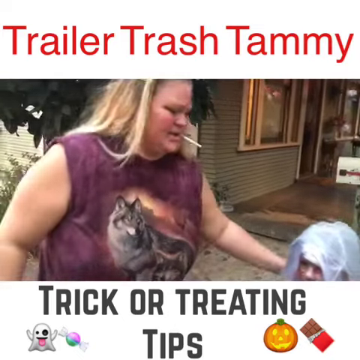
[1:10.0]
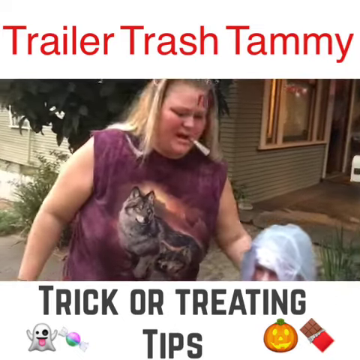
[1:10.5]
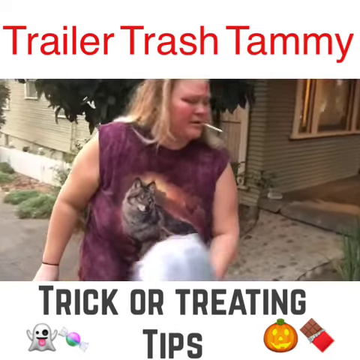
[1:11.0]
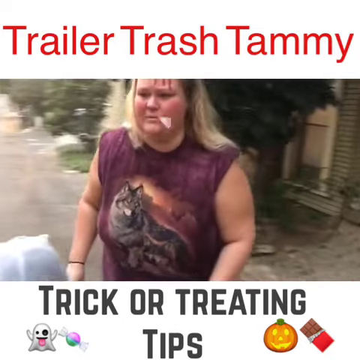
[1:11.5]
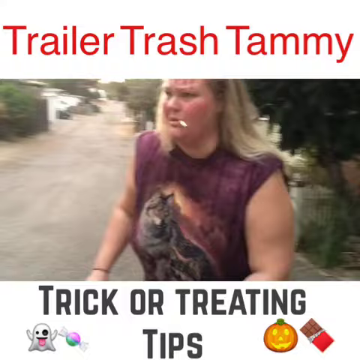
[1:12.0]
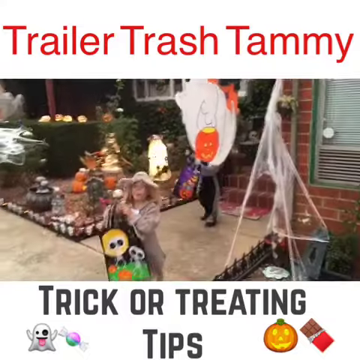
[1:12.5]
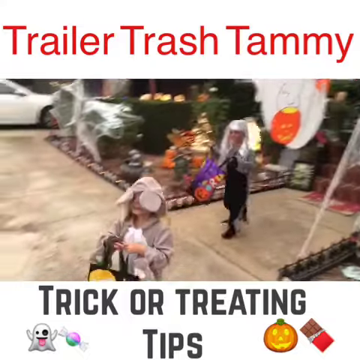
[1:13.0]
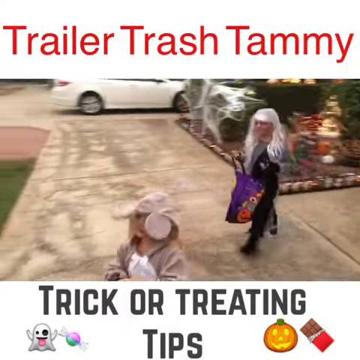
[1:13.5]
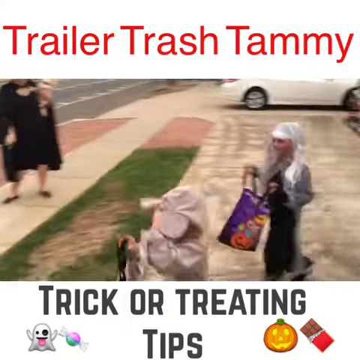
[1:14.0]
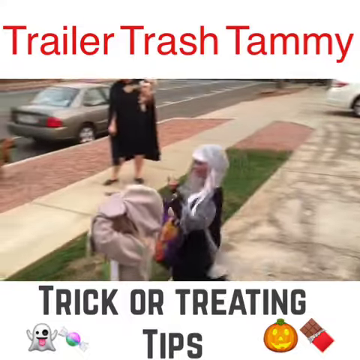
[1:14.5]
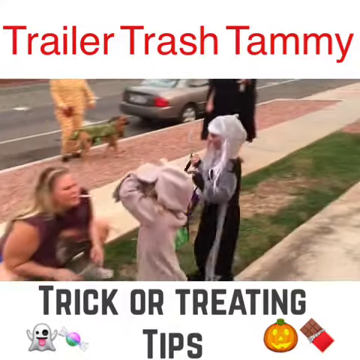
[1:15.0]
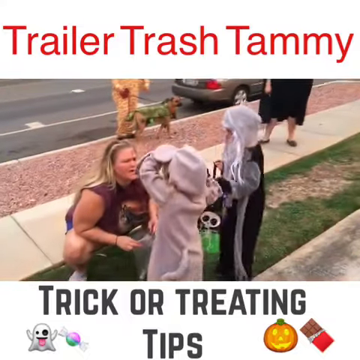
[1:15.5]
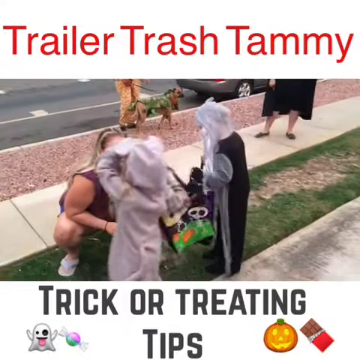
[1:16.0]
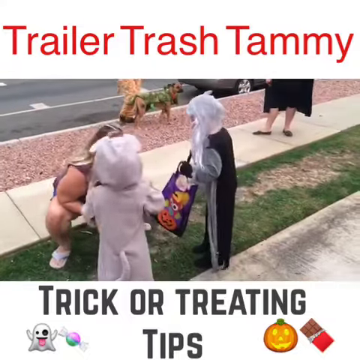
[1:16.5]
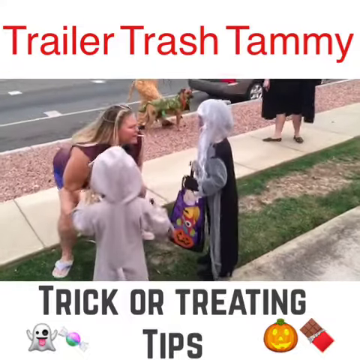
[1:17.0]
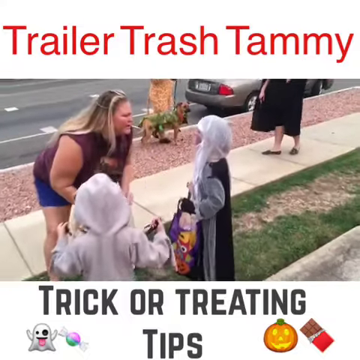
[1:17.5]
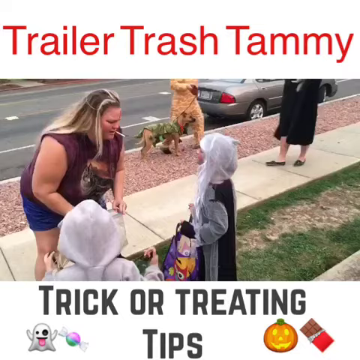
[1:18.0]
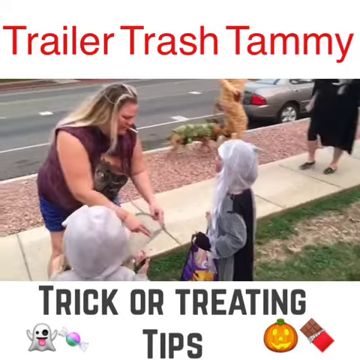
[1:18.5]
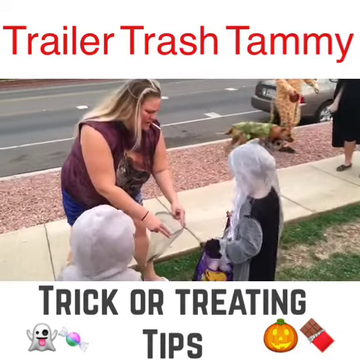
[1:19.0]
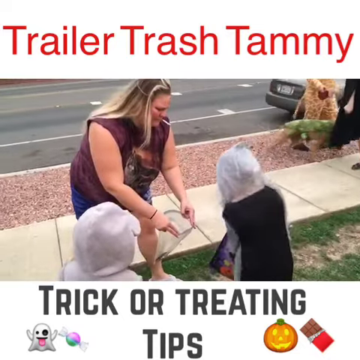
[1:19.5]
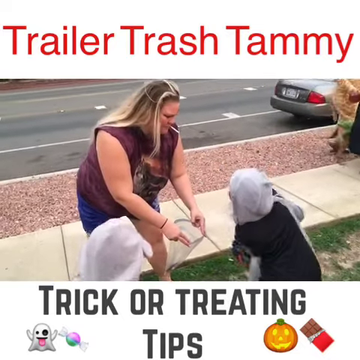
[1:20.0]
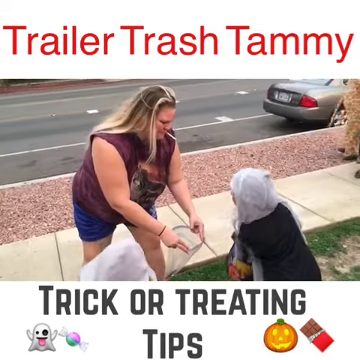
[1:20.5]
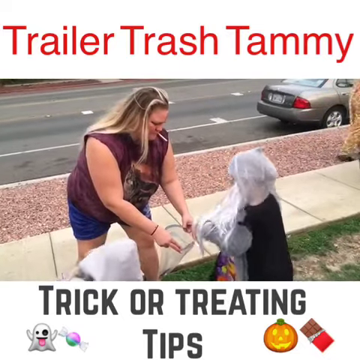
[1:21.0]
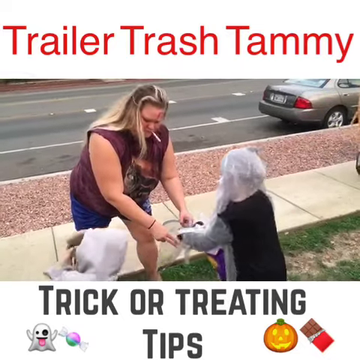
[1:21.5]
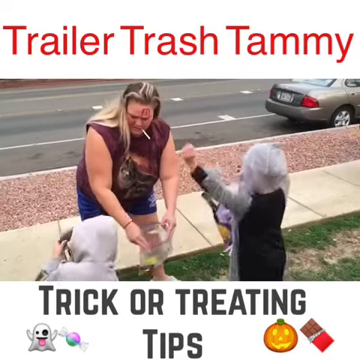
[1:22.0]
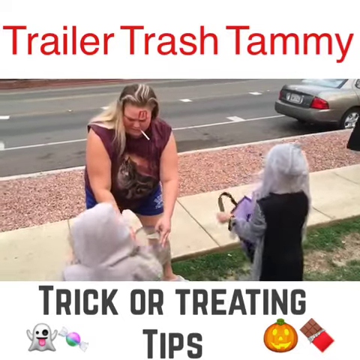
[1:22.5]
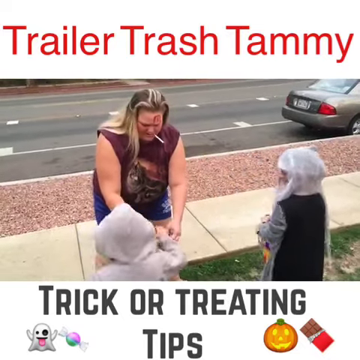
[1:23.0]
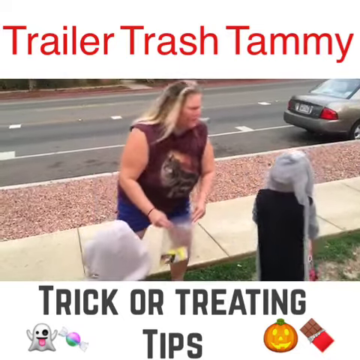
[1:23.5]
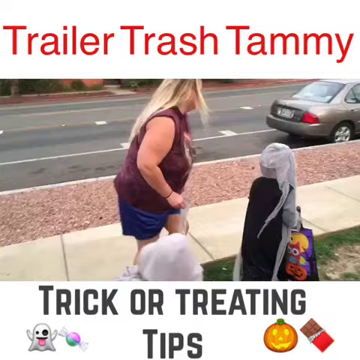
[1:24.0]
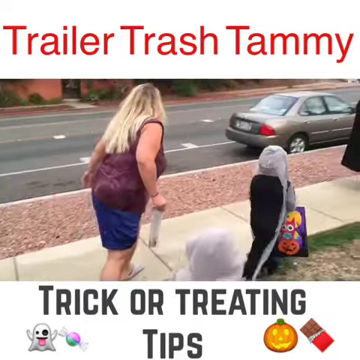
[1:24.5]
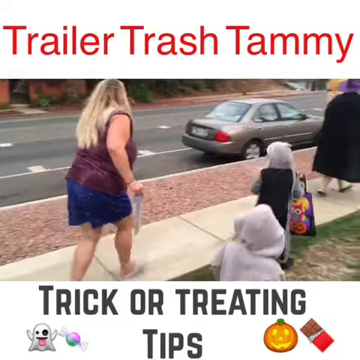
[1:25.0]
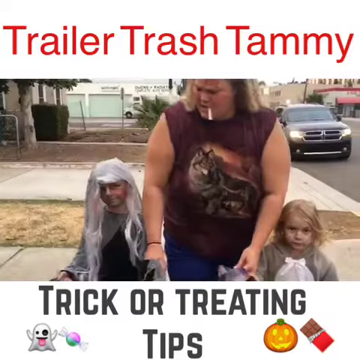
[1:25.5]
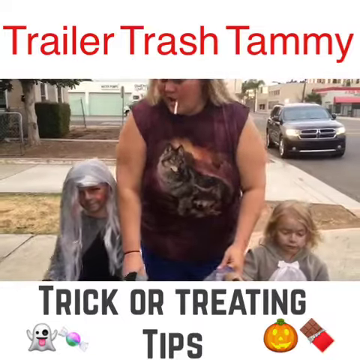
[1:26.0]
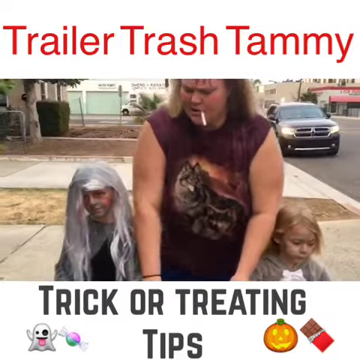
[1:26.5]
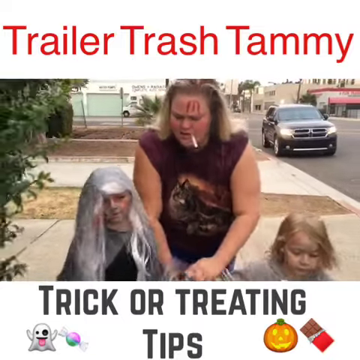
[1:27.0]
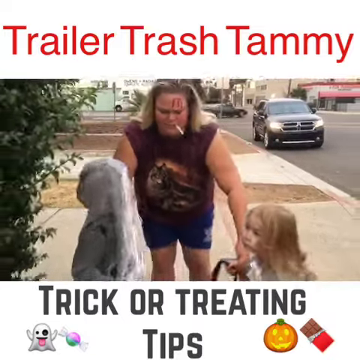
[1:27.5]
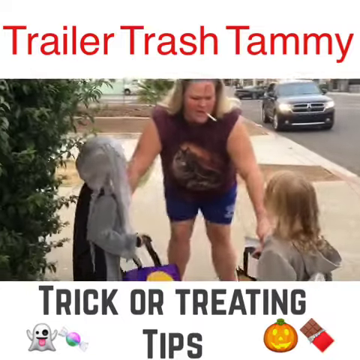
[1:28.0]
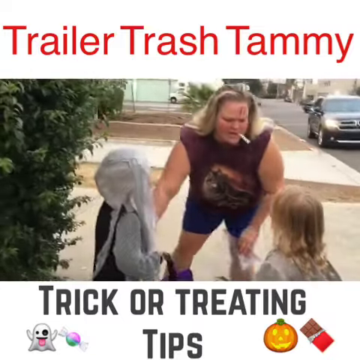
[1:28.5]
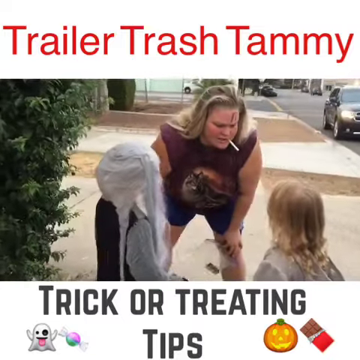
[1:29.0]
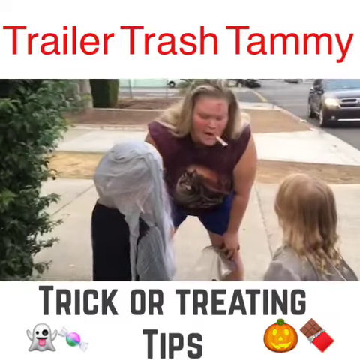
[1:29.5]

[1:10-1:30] The children appear to walk back toward Tammy after going up to a home to trick-or-treat. Trailer Trash Tammy still has the unlit cigarette hanging out of her mouth. The children walk away happy with their candy, now holding actual trick-or-treating bags instead of the gallon-sized Ziploc bags. They run away from the house gleefully after receiving candy from the homeowner. Next, a heavyset woman walks down the street in a black muumuu and black flat shoes. A beige sedan is parked on the side of the street. The children walk over to Tammy, who is kneeling down and talking to them; she has on white flip-flops. One of the children, a little girl, is dressed like a mouse, and the little boy is dressed like a goblin or ghoul. In the background, another person walks down the sidewalk with a beige dog.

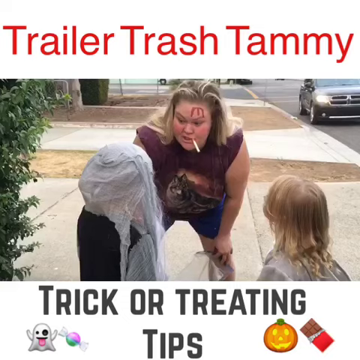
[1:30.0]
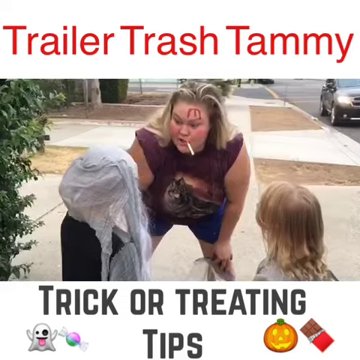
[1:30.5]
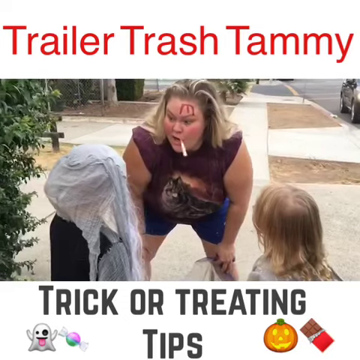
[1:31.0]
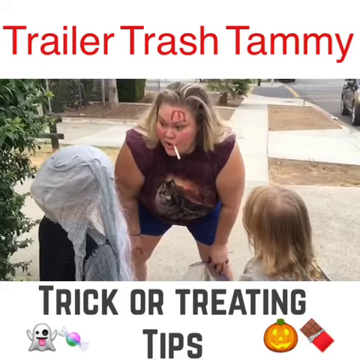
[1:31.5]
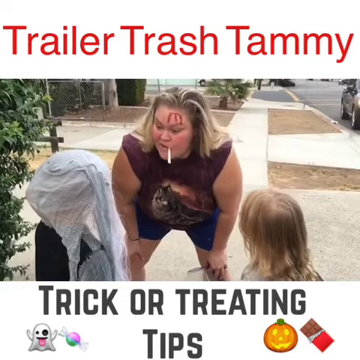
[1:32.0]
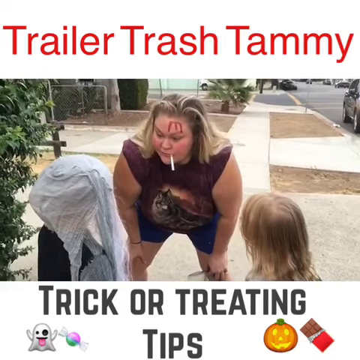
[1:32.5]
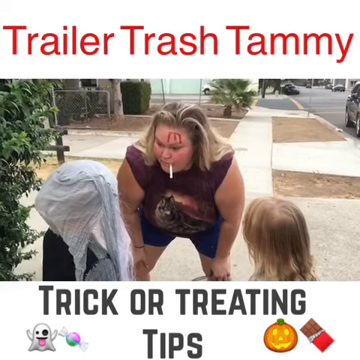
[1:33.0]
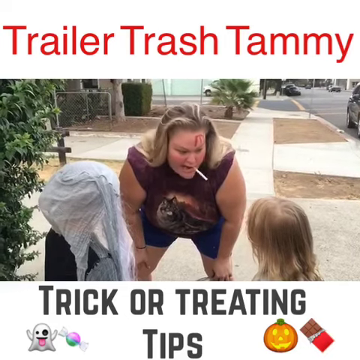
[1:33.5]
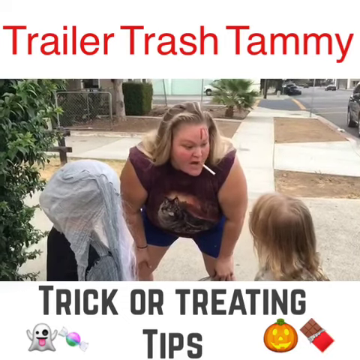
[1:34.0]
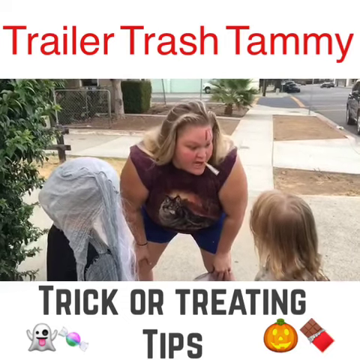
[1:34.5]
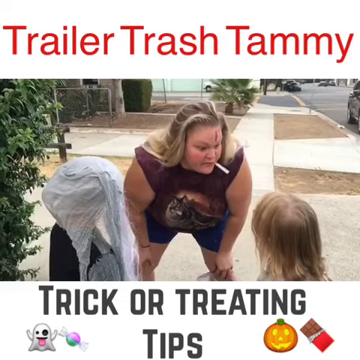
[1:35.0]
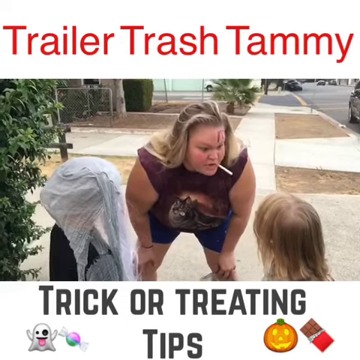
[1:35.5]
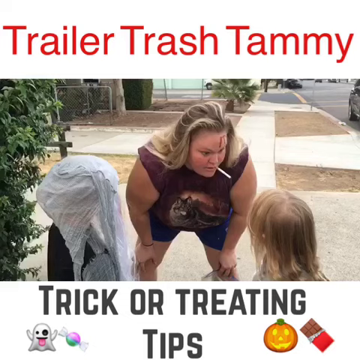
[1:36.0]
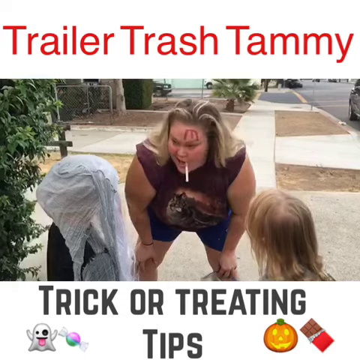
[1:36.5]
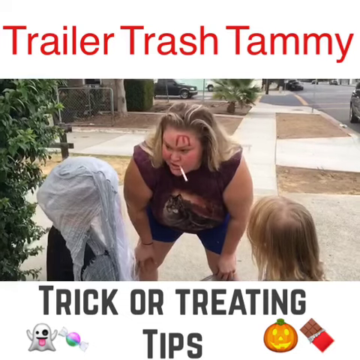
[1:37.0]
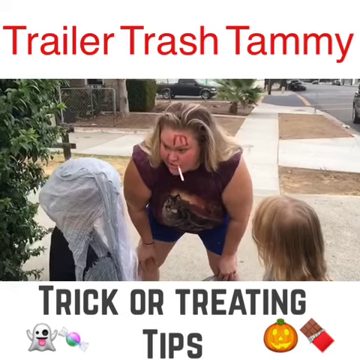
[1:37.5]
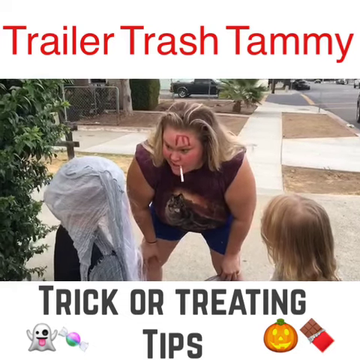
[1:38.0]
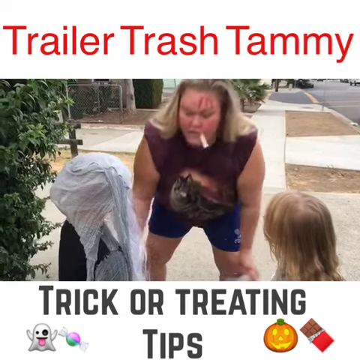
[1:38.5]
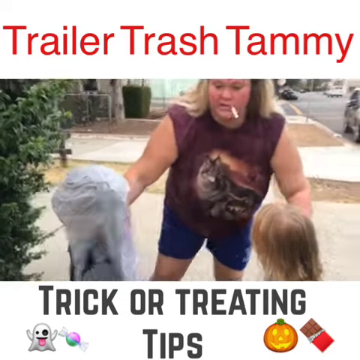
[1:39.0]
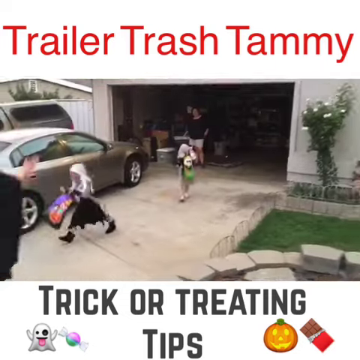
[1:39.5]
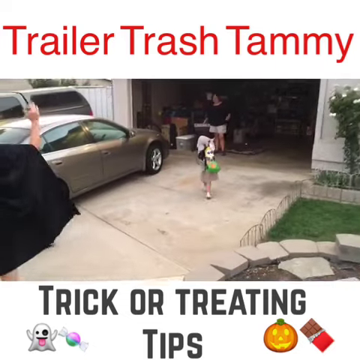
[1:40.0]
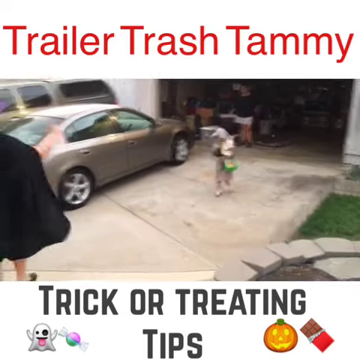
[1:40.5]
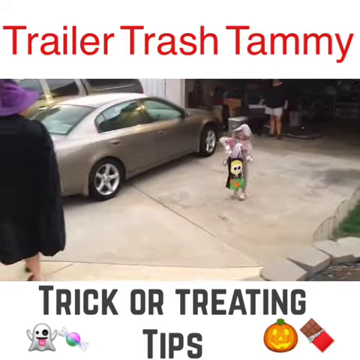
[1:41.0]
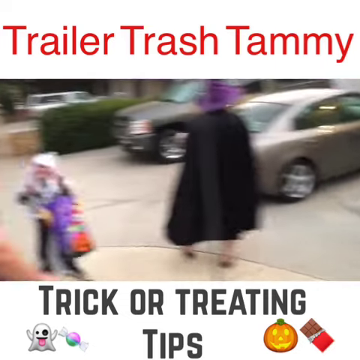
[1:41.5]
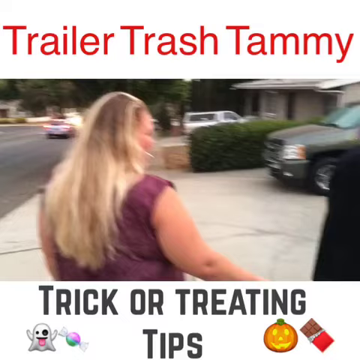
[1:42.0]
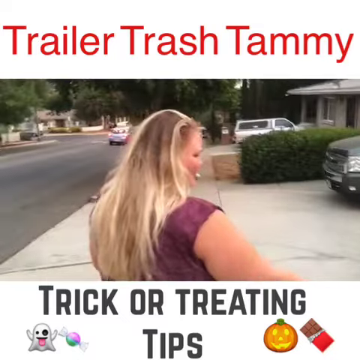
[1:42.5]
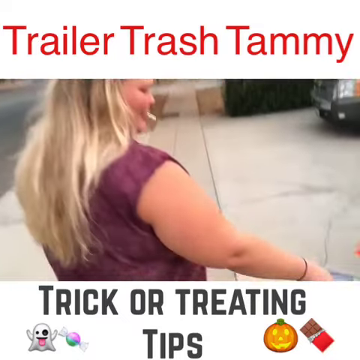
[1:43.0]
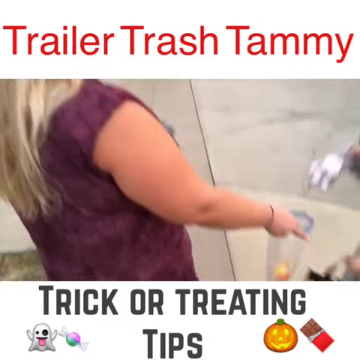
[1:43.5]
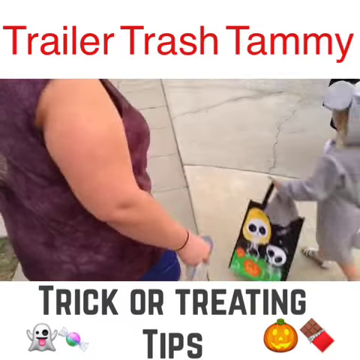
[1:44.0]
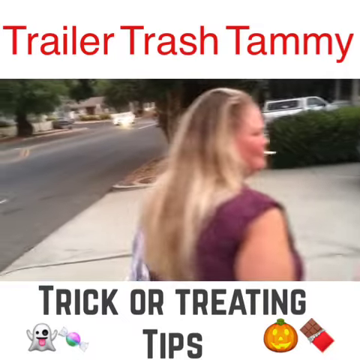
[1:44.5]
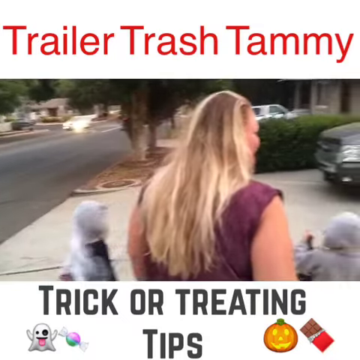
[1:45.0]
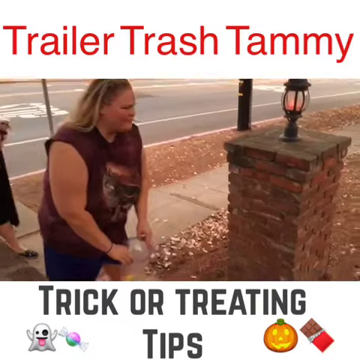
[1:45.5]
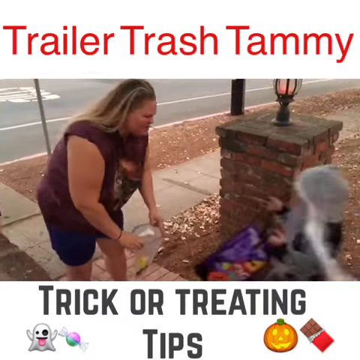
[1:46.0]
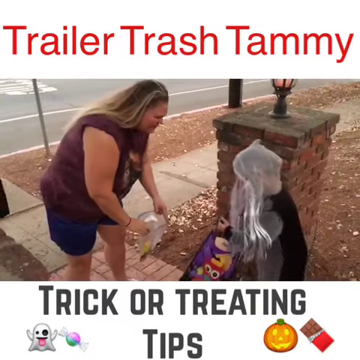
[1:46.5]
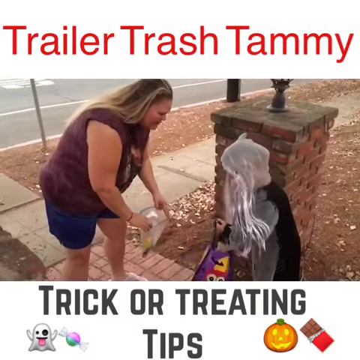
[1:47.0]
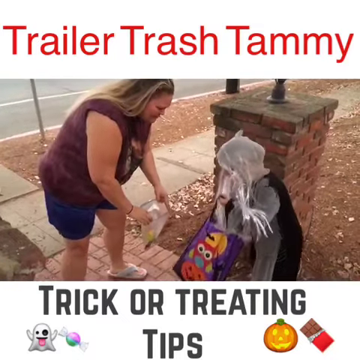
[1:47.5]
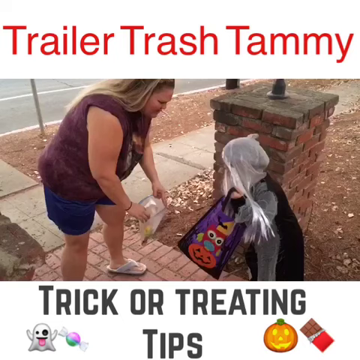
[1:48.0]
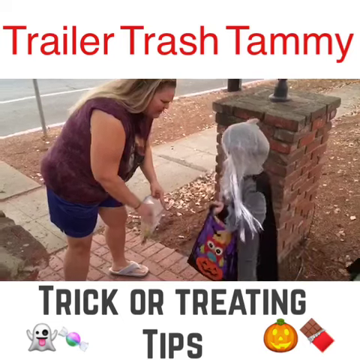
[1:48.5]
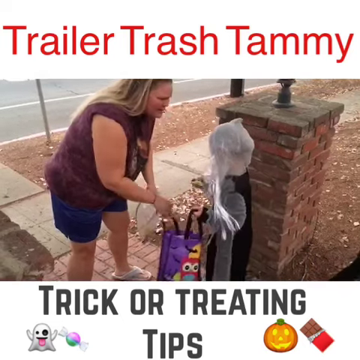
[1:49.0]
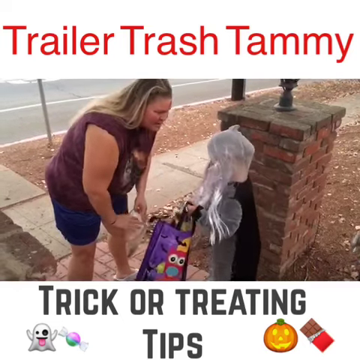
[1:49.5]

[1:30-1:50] Trailer Trash Tammy instructs the children further on how to trick-or-treat as they approach the homes. She is bent over toward them, bending from the waist with her knees slightly bent and the palms of her hands planted firmly on her knees. She still holds the gallon-size Ziploc bag. In the background, a vehicle drives down the street, apparently with its headlights on even though it is daylight. They are standing near an intersection, and a pickup truck approaches it. Other people walk down the sidewalk, and near them is a person dressed as a witch in a witch's cape and a purple witch's hat.